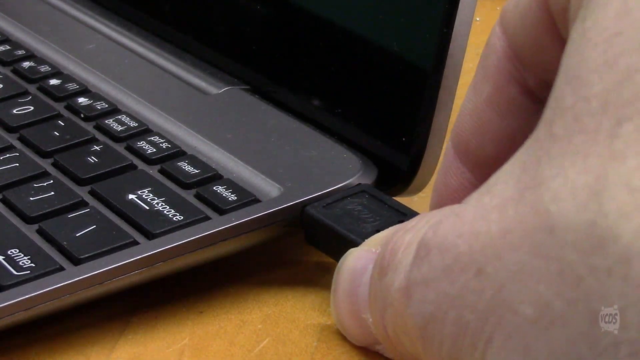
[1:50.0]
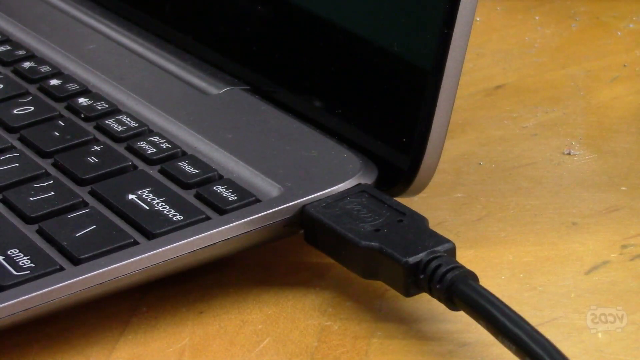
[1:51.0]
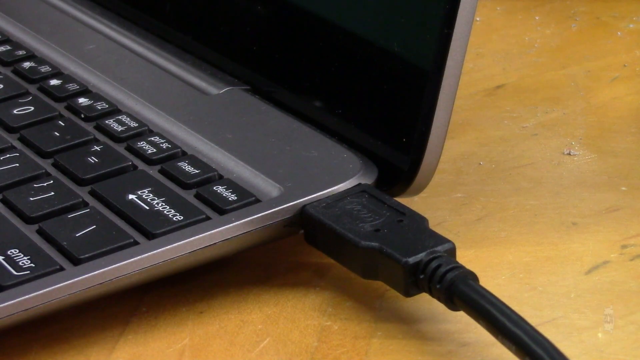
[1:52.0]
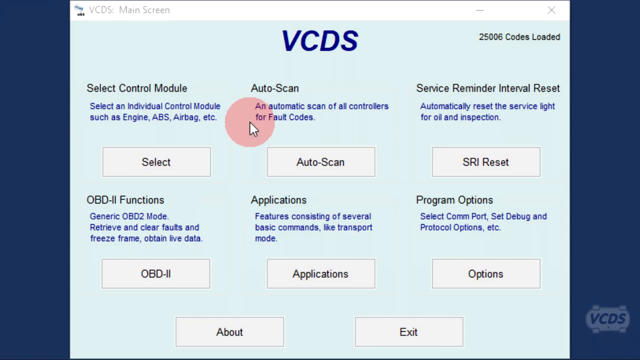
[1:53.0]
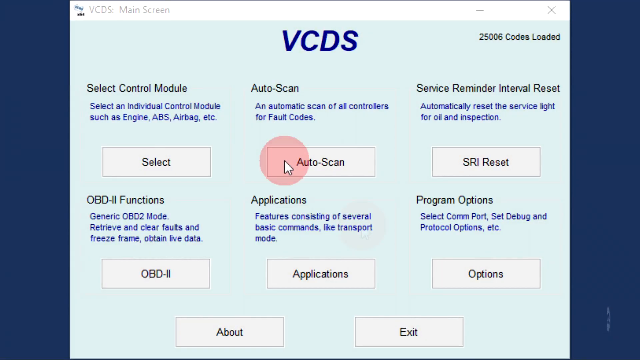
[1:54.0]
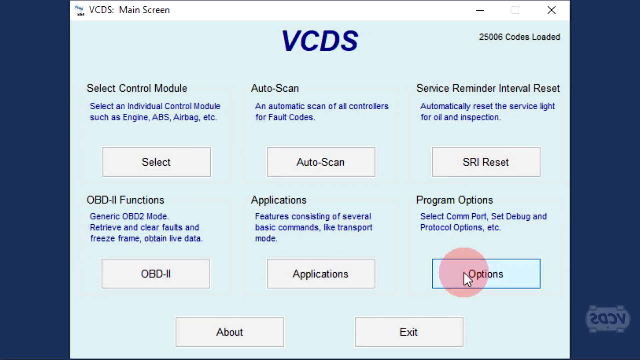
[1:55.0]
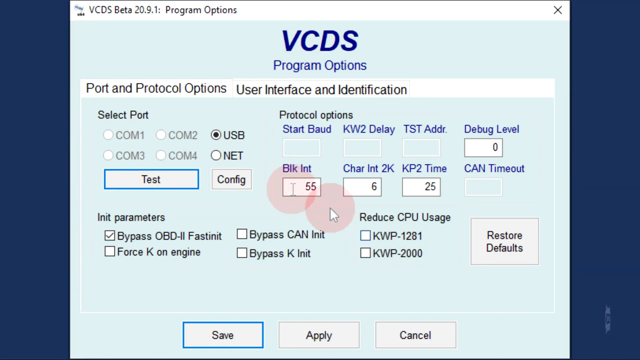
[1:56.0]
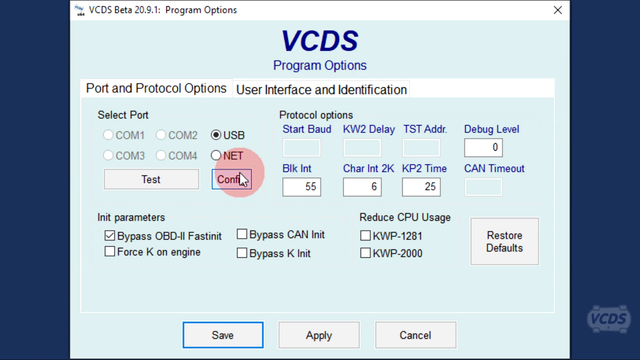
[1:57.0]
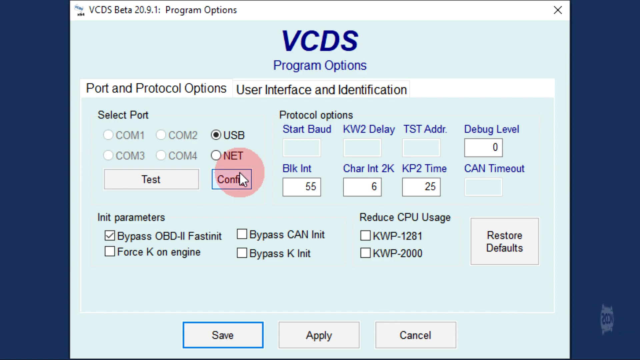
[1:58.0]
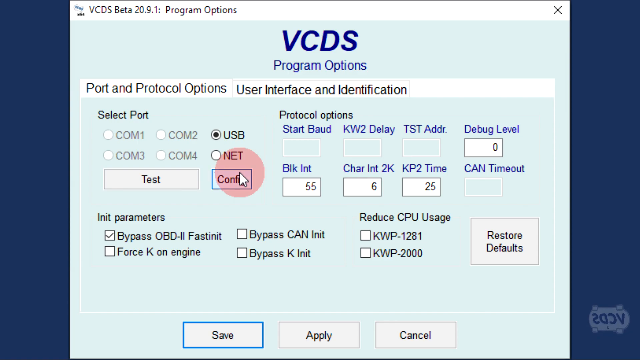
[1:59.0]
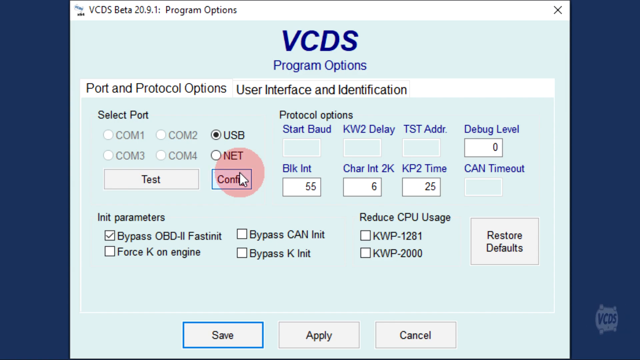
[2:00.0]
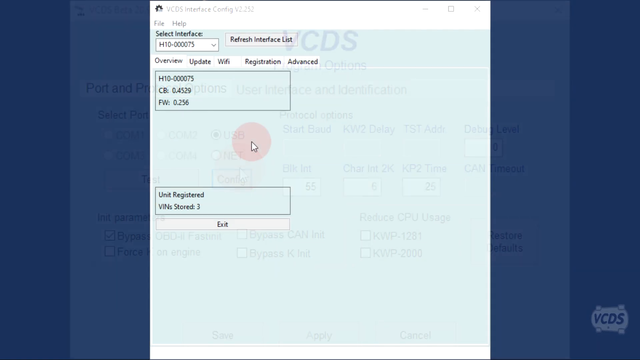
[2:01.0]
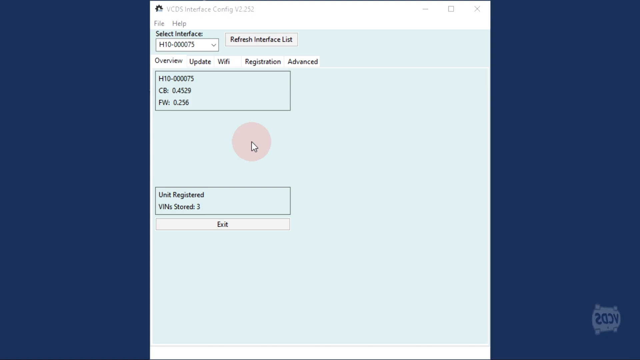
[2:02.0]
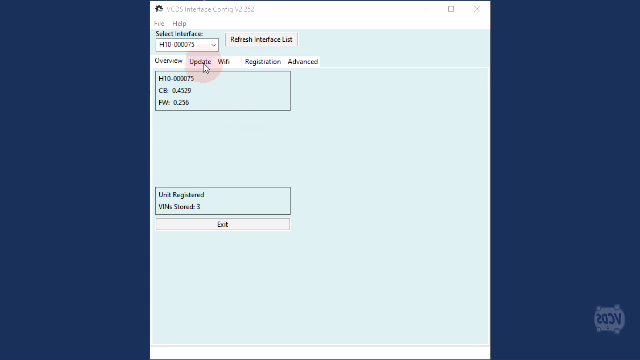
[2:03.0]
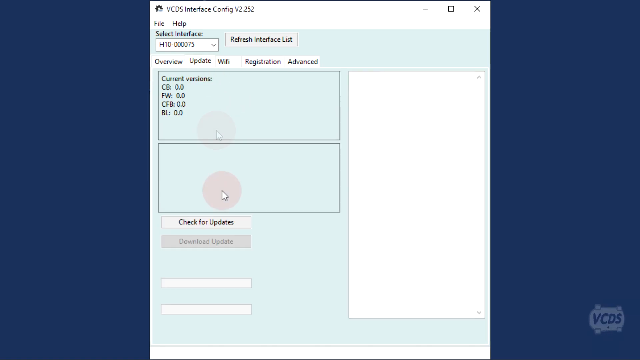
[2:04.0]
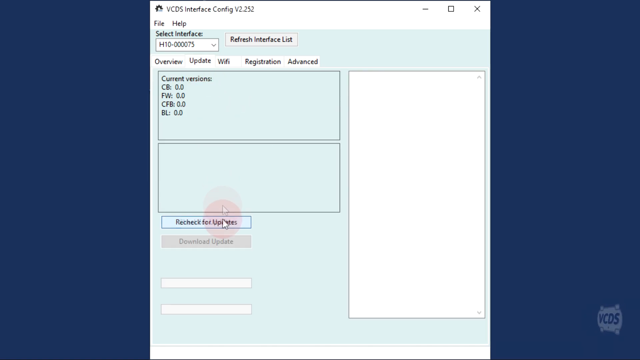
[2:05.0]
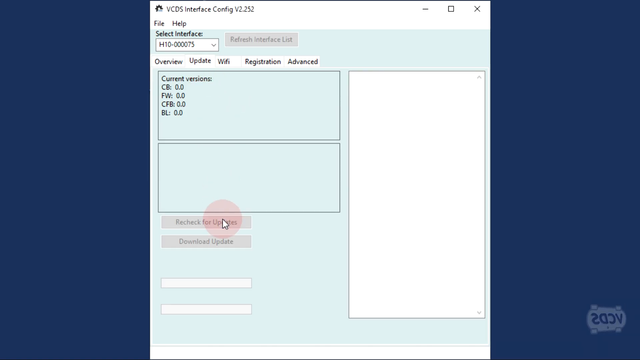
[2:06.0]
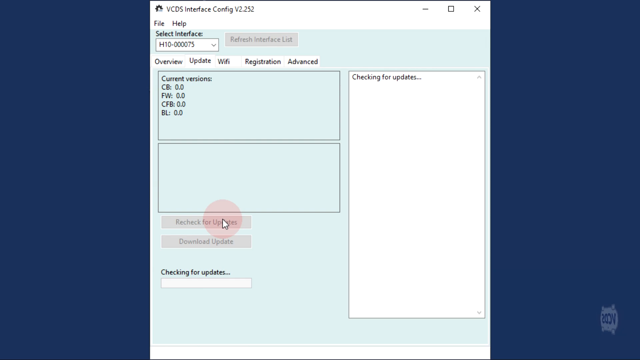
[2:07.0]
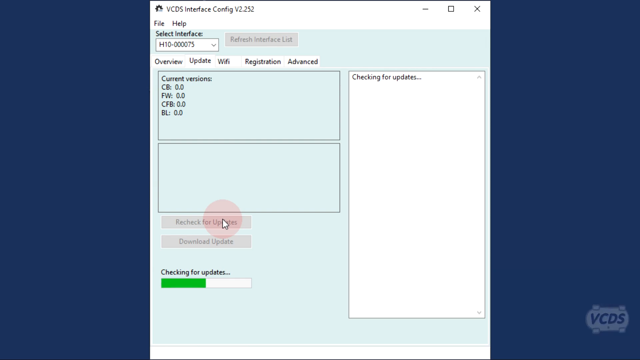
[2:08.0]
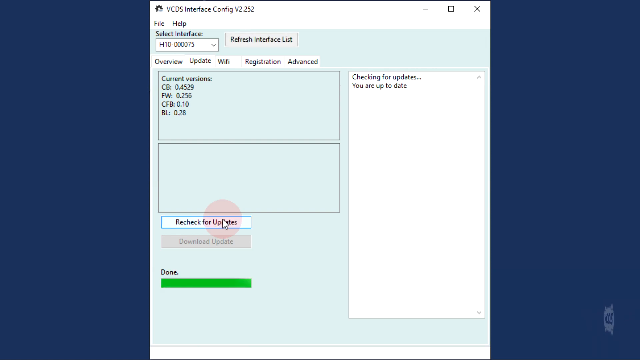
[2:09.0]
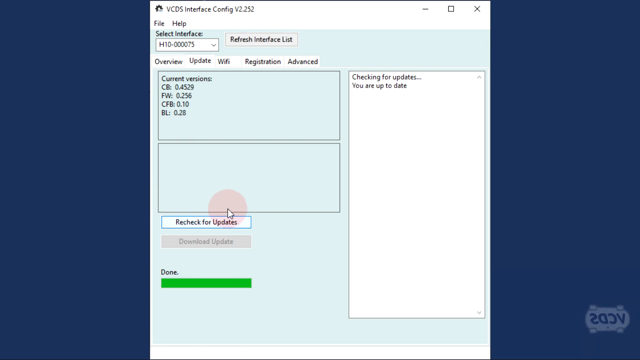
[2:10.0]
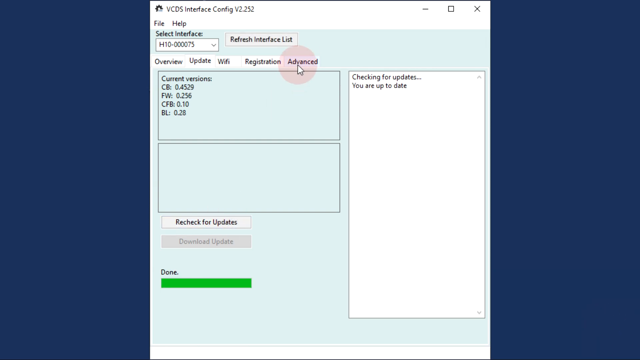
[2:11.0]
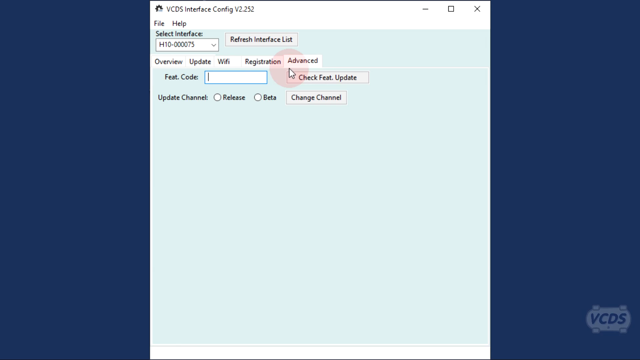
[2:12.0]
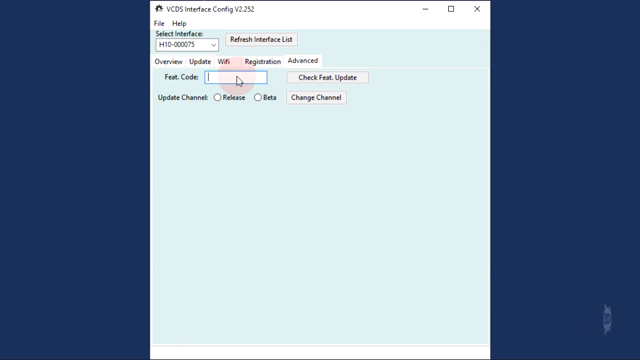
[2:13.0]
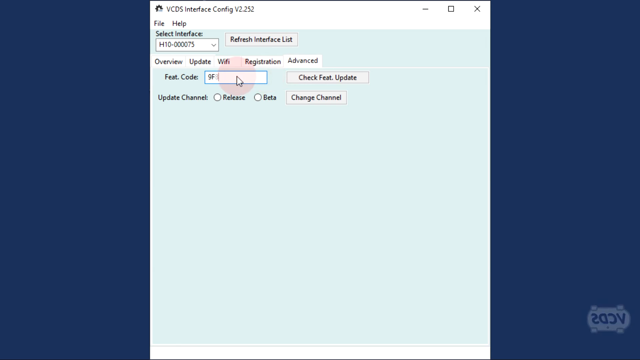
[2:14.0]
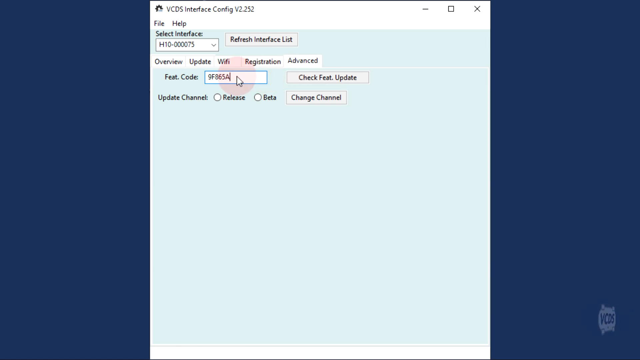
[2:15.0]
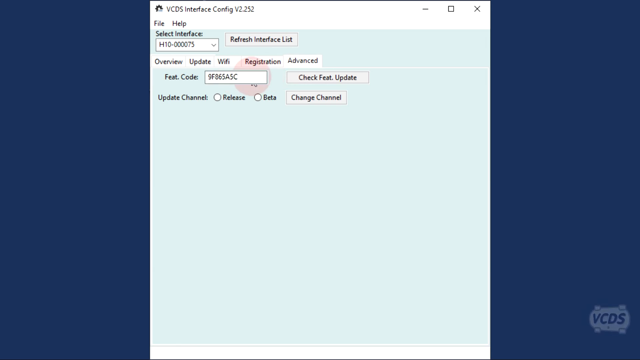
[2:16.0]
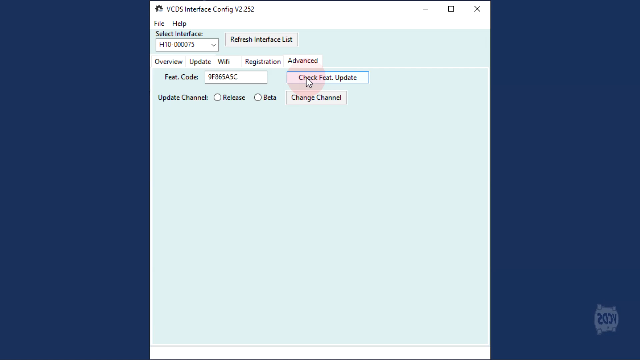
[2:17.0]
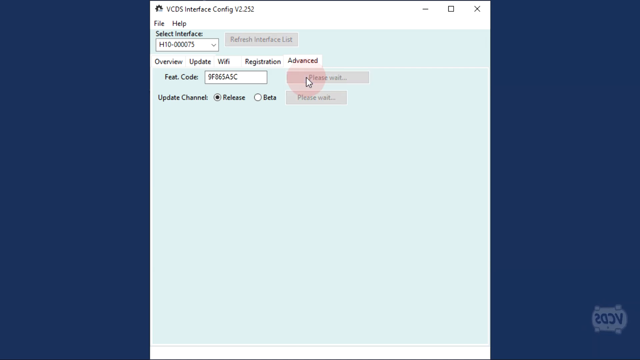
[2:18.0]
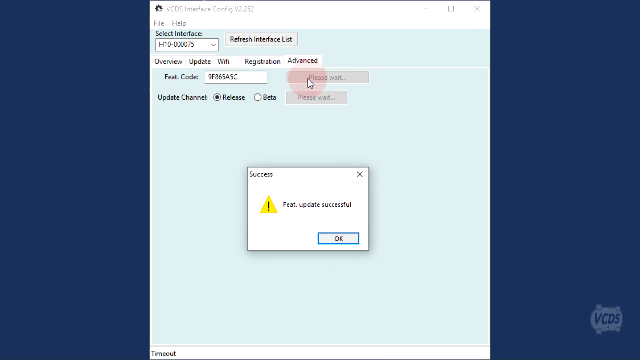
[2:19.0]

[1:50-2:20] What looks like a man's right hand puts a black charger into the right side of an open laptop. The laptop's keys are black, and the backspace, delete and enter keys are visible. The hand pulls away, and a light blue page opens with the mouse moving around toward the lower right button, which reads "Options." The other visible buttons are "Select" and "AutoScan" at the upper left, "SRI Reset" on the right, "0BD2" at the lower left, then "Applications," and then the "Options" button, which is highlighted with the mouse about to click it. The mouse moves around and stops at a button, and to the right of it is a button reading "BLKINT" with the number 55.